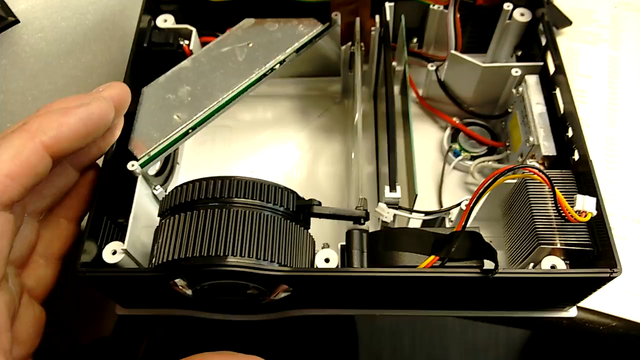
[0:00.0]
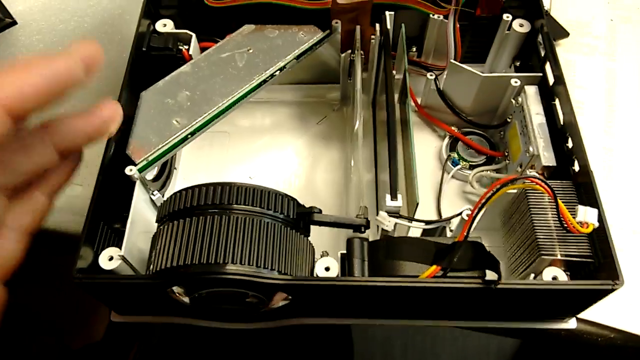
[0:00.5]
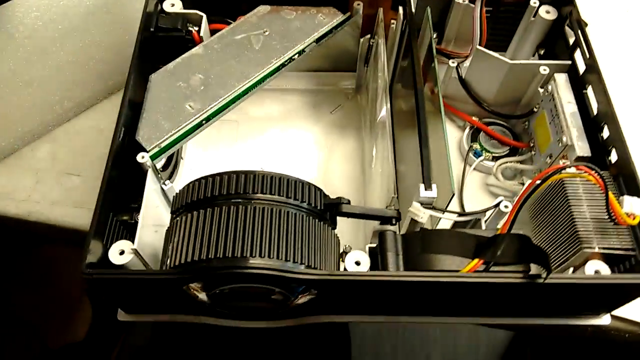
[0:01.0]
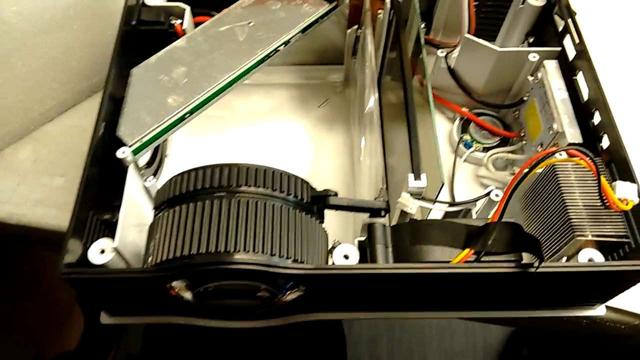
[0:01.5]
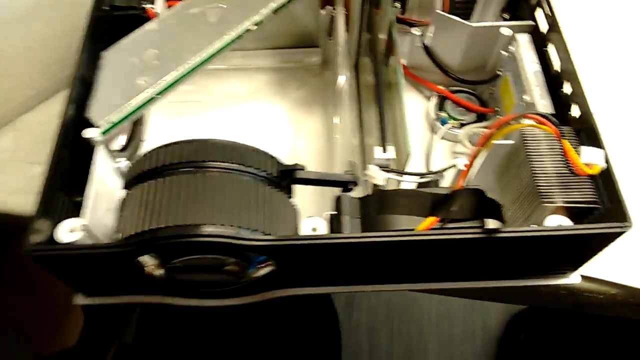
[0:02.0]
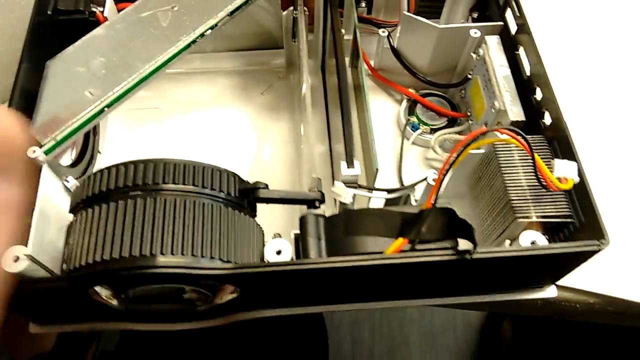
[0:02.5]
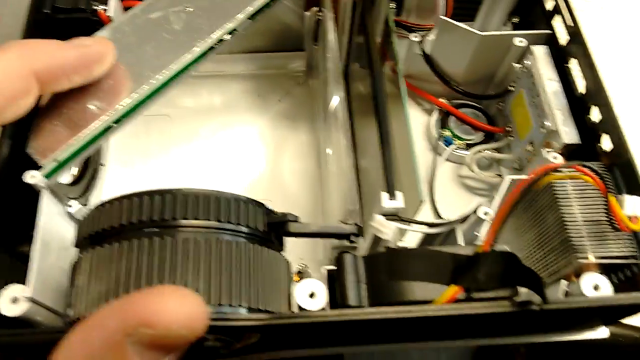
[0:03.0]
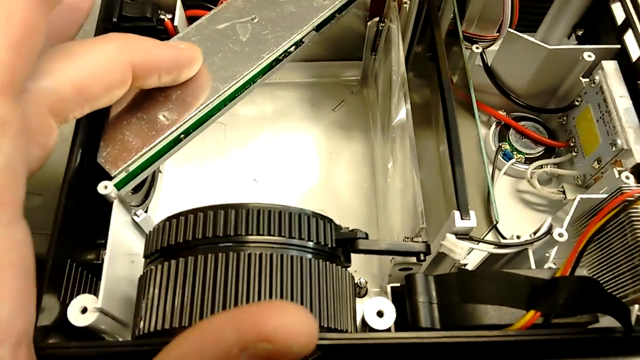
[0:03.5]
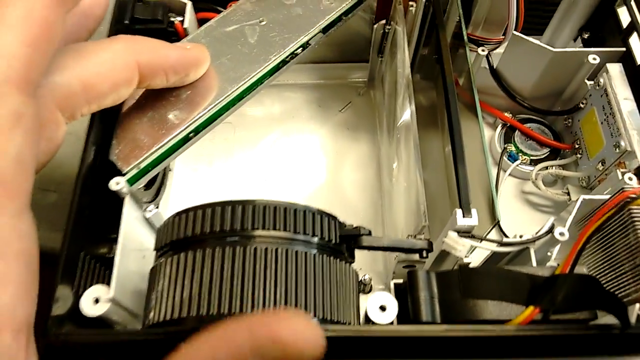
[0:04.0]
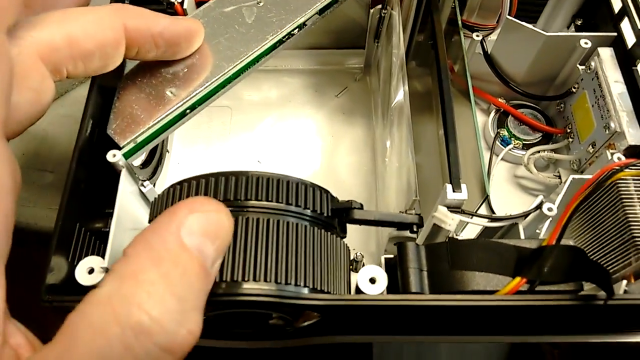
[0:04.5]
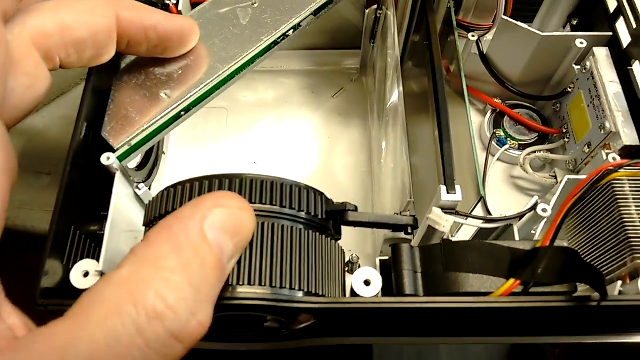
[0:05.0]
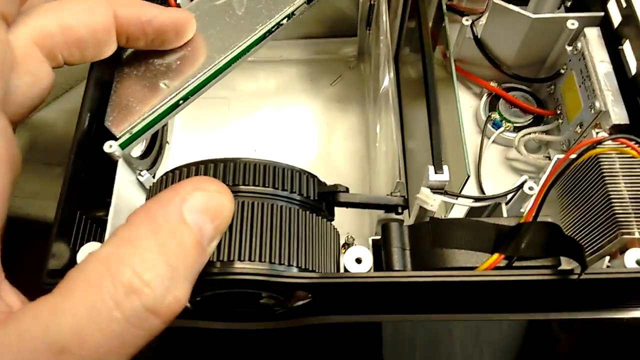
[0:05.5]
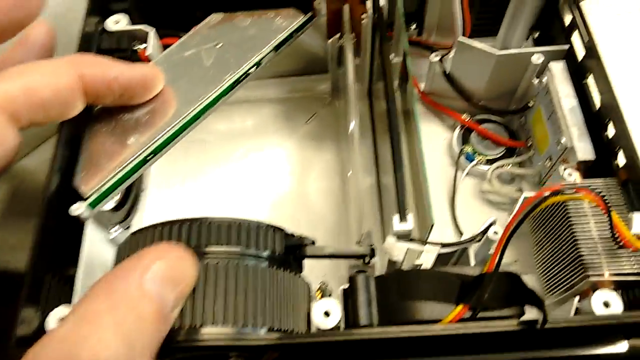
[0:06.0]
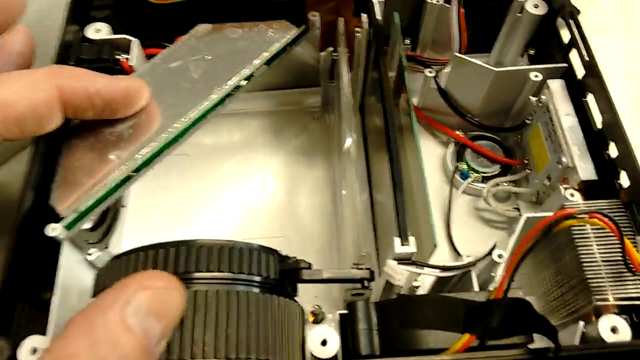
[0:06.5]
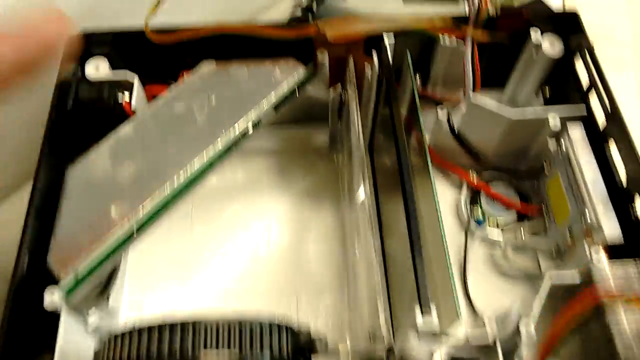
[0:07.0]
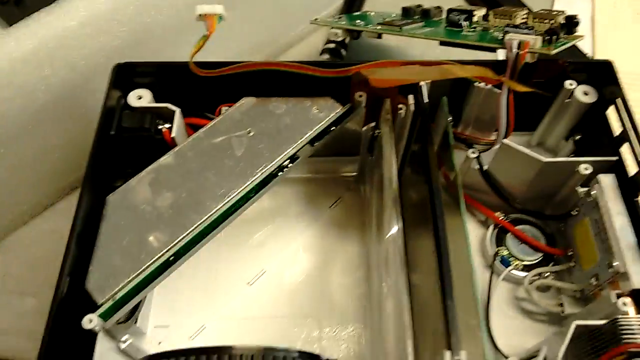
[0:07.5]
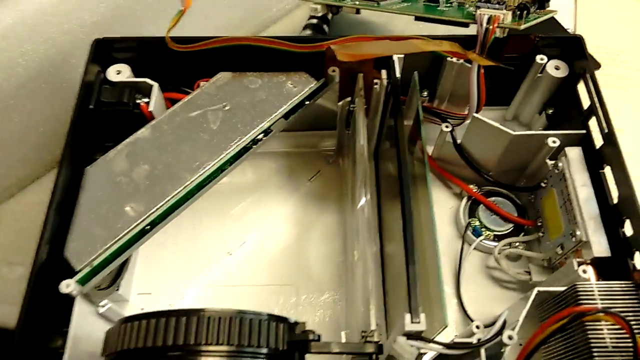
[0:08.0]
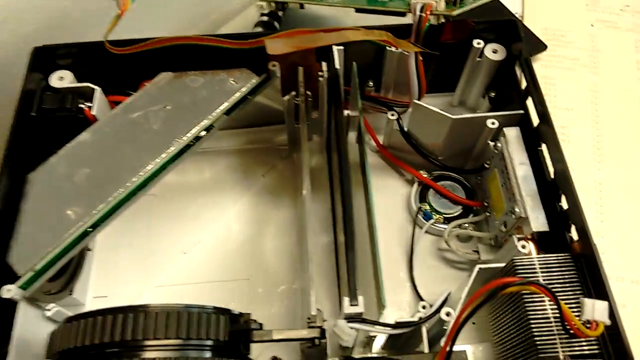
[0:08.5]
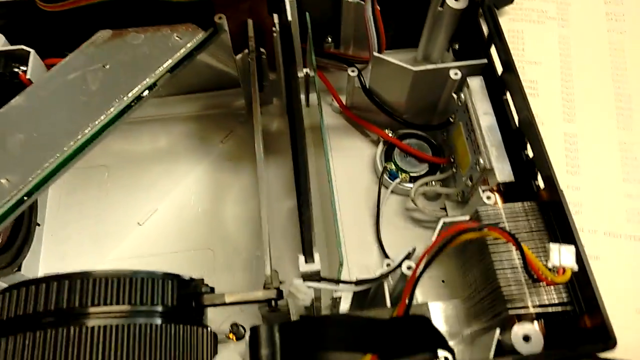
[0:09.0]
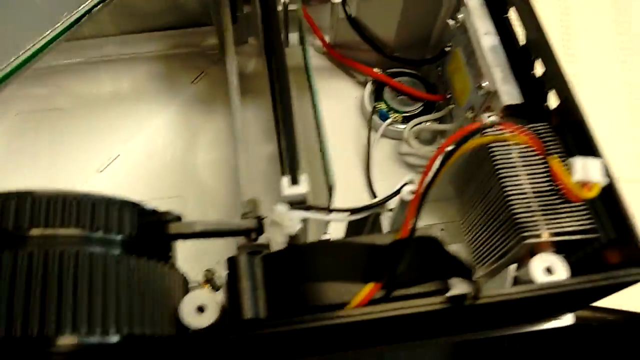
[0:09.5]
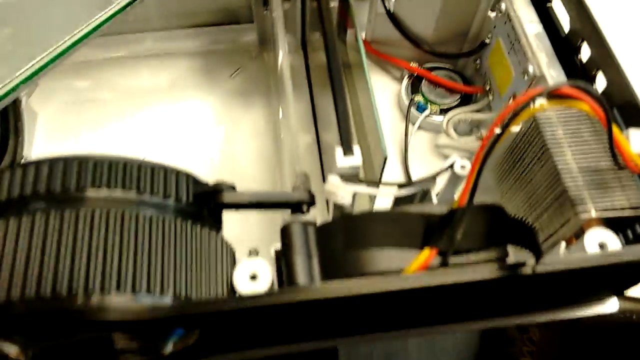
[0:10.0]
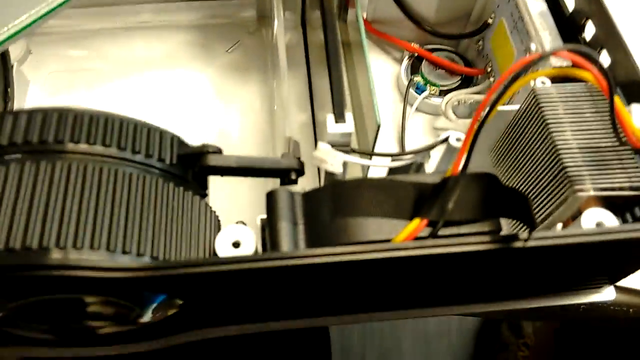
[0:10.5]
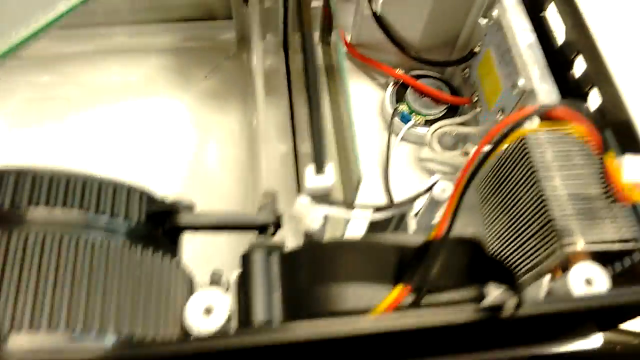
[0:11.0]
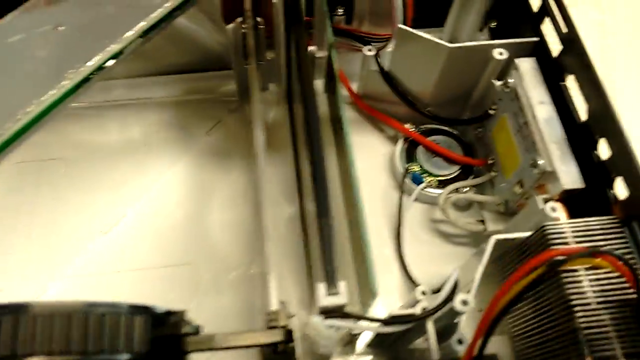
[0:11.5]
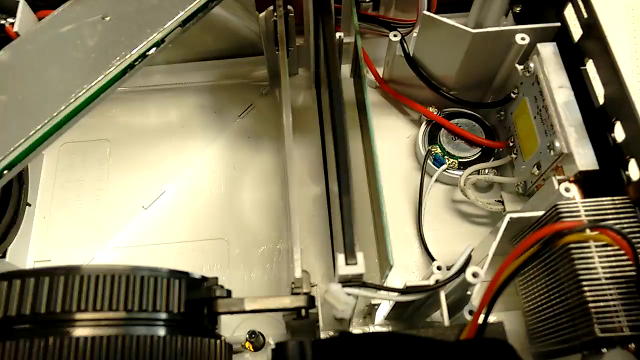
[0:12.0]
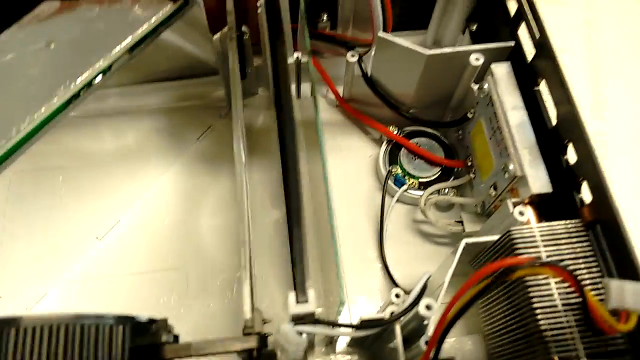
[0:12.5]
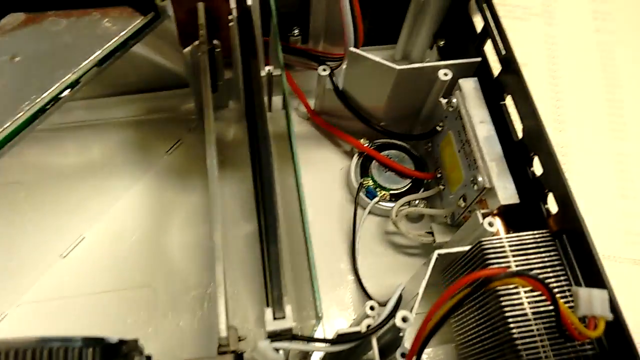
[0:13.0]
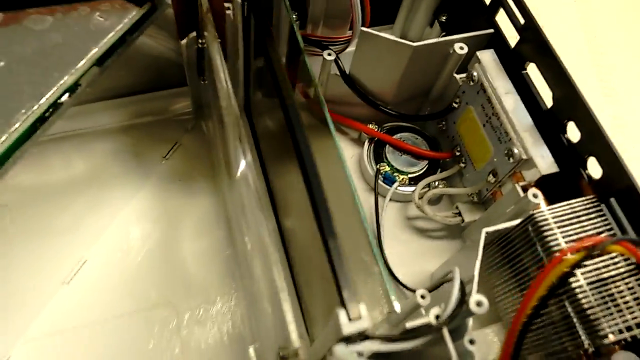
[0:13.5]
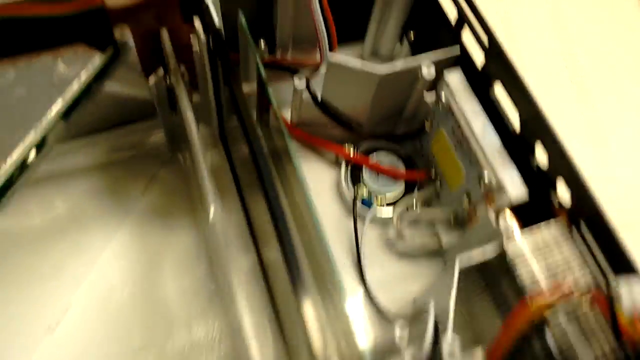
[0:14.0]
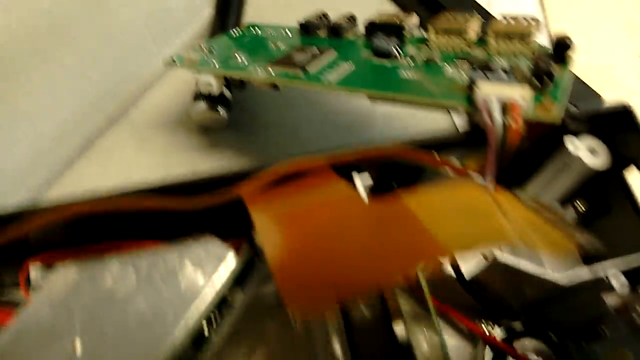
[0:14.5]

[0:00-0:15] A Caucasian person's hand works on some sort of projector. The person touches the different components one by one: the lens, what looks like a mirror, some wires, and many other parts and pieces inside the open box. The camera pans to the back of it, where a motherboard with additional wires and some tools is visible. It appears to be a demonstration of how to repair the machine or of what is broken inside it.